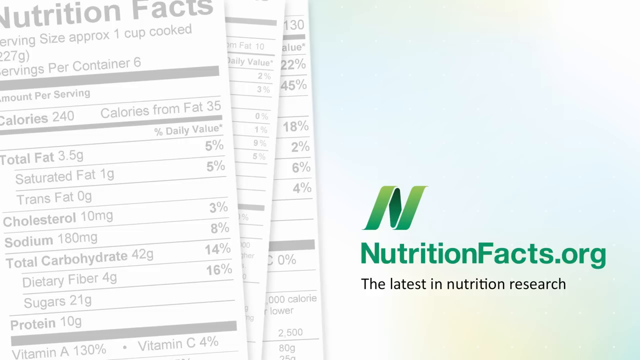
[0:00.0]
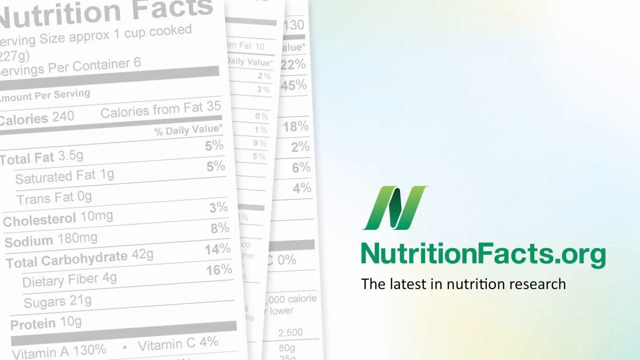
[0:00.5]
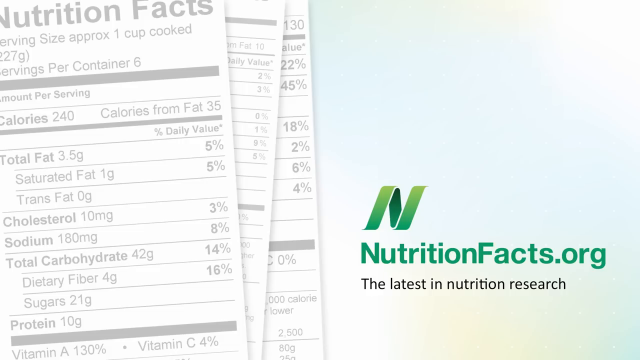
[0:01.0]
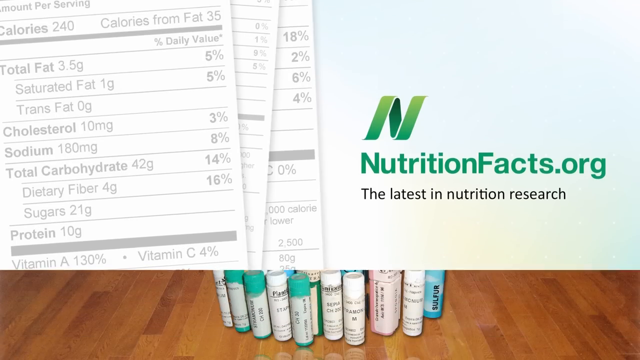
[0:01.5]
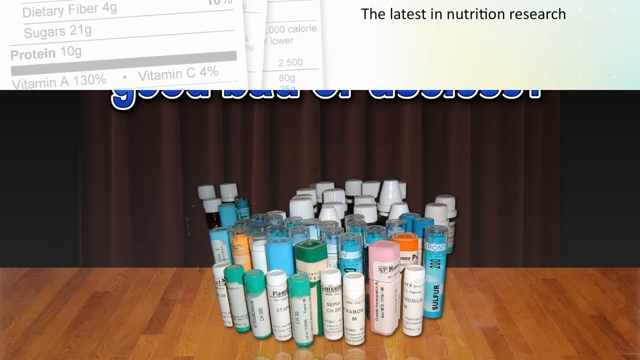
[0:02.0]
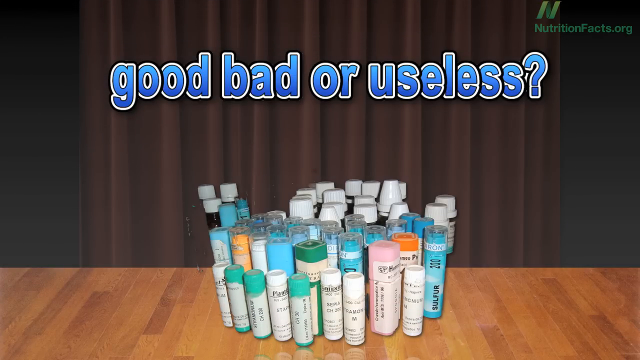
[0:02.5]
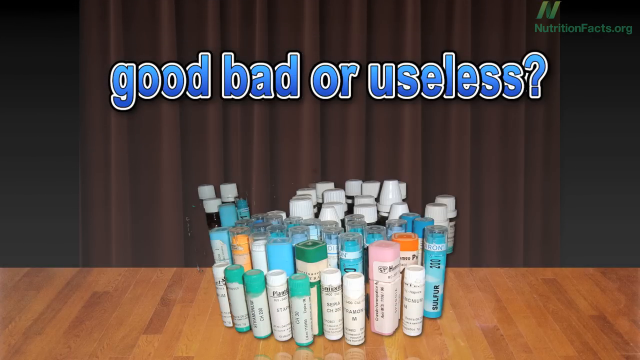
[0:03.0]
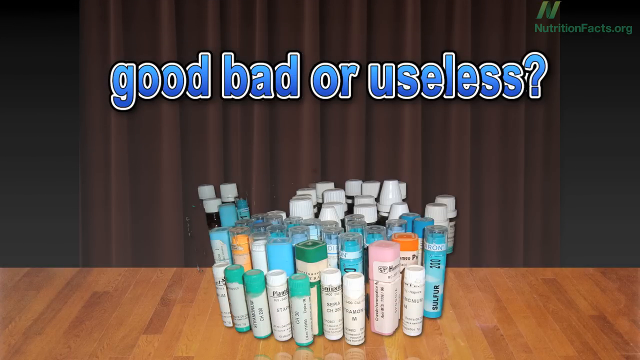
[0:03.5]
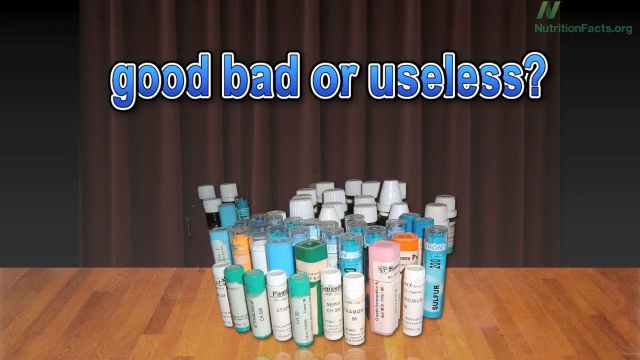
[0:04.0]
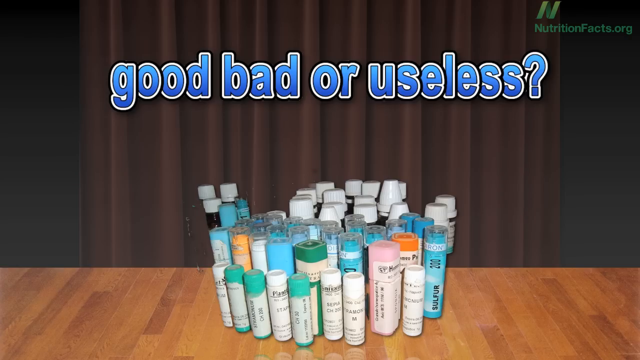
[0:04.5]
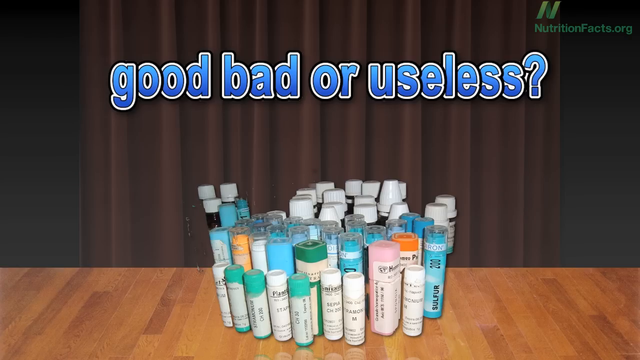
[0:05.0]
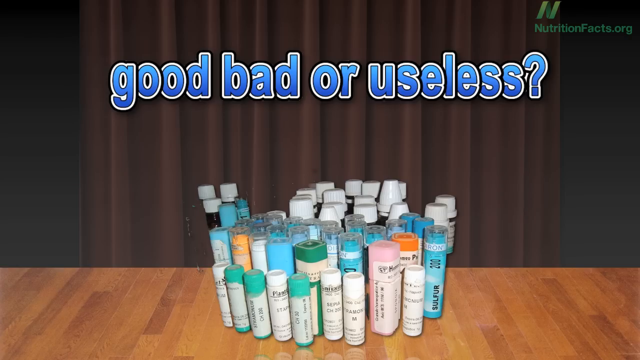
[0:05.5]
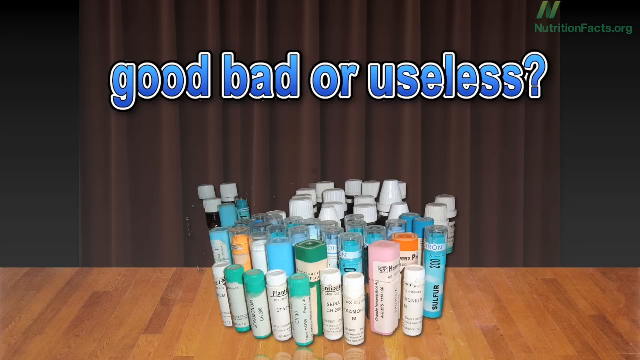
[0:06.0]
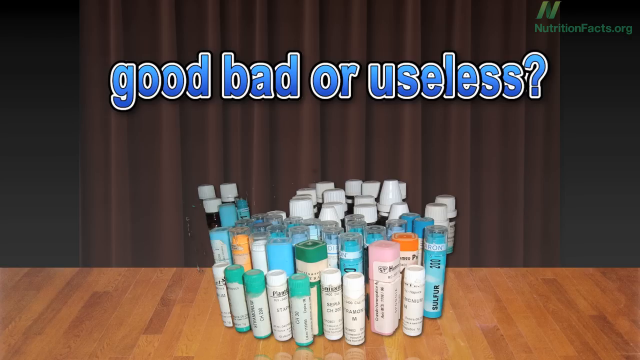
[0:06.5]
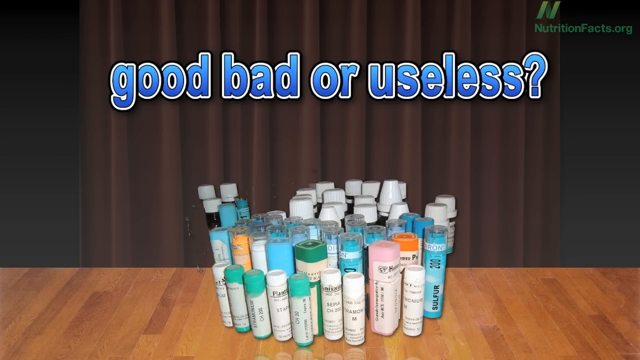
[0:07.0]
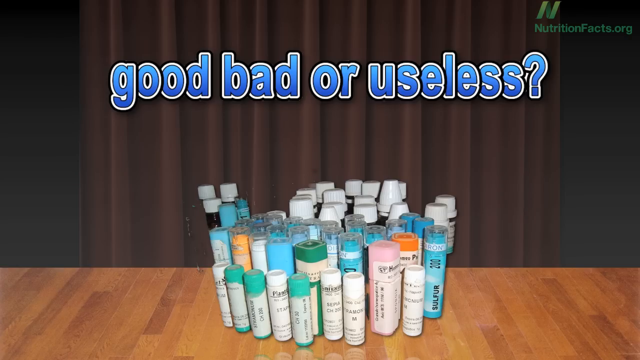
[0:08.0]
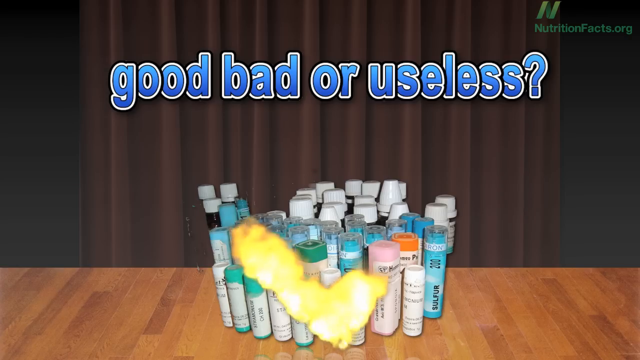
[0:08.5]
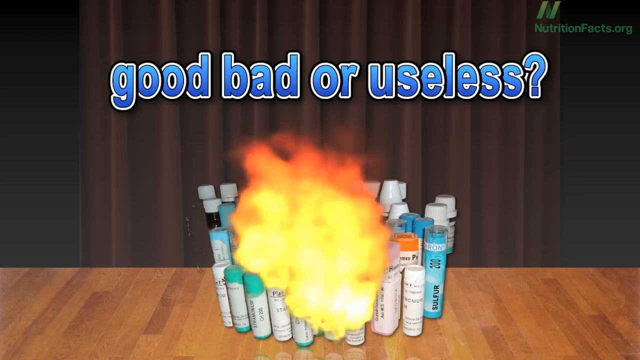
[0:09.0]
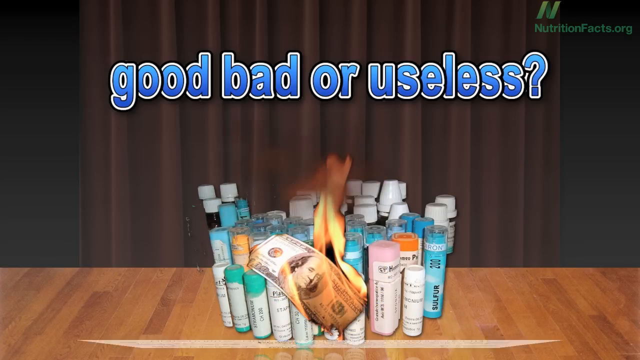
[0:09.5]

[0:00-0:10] The video is from nutritionfacts.org, the latest in nutrition research. It opens on a title page with the logo and website information in the bottom right corner. On the left side are examples of nutritional information like that found on food packages, showing calories, total fat, cholesterol and similar items along with their percent daily value. Next comes a series of many canisters that are hard to make out; they look like medications or something similar. Above them, blue text reads "good, bad, or useless."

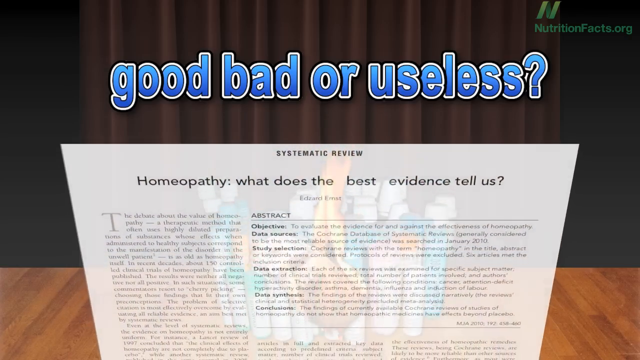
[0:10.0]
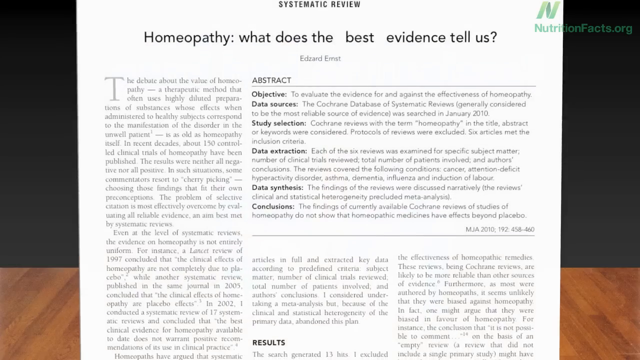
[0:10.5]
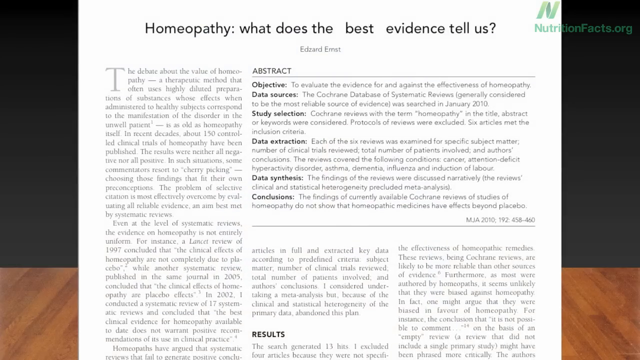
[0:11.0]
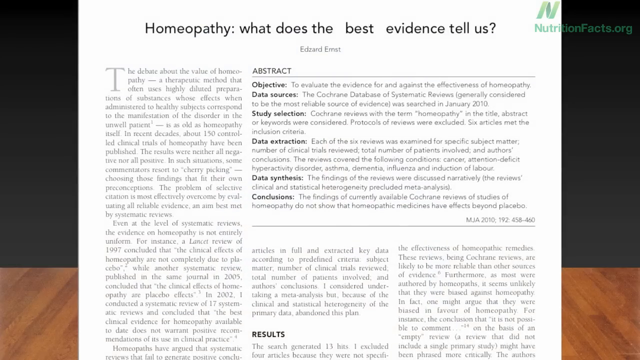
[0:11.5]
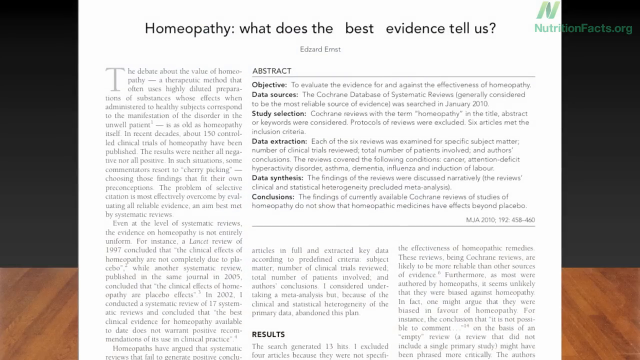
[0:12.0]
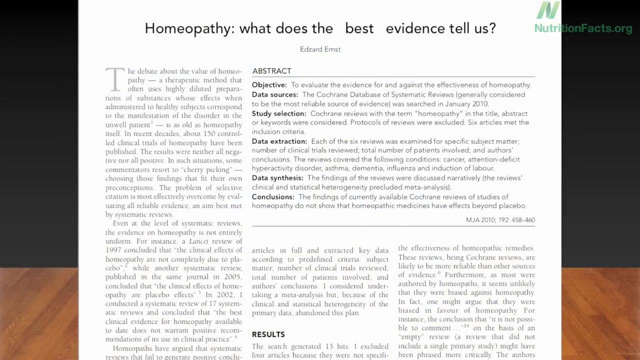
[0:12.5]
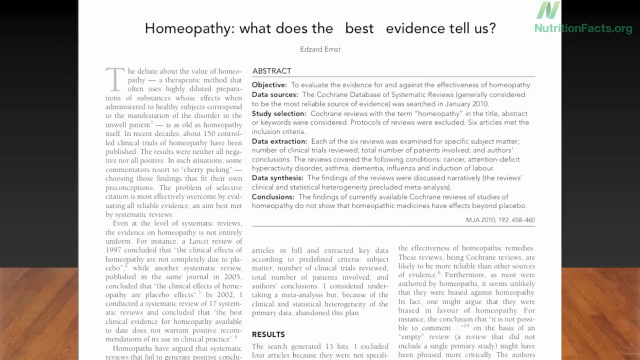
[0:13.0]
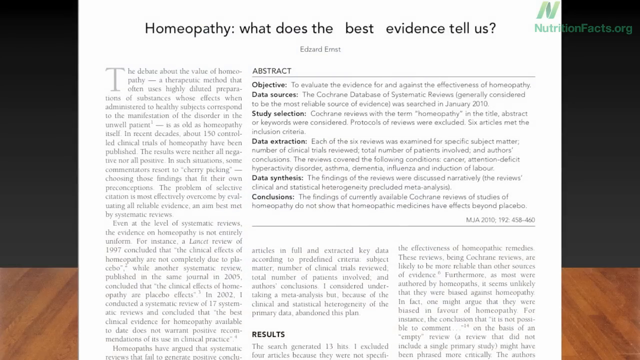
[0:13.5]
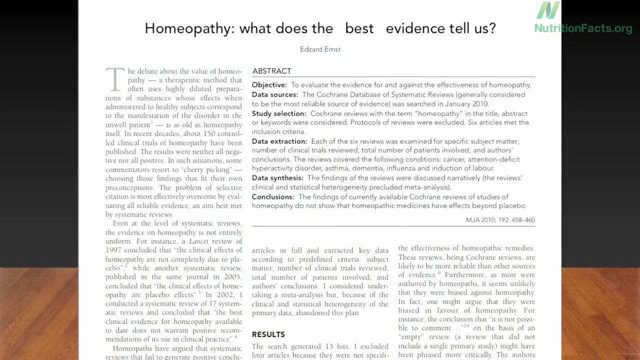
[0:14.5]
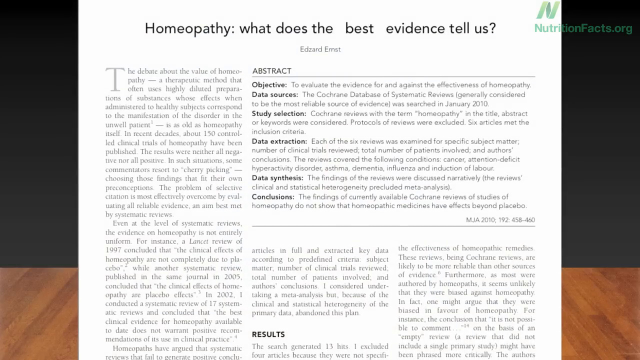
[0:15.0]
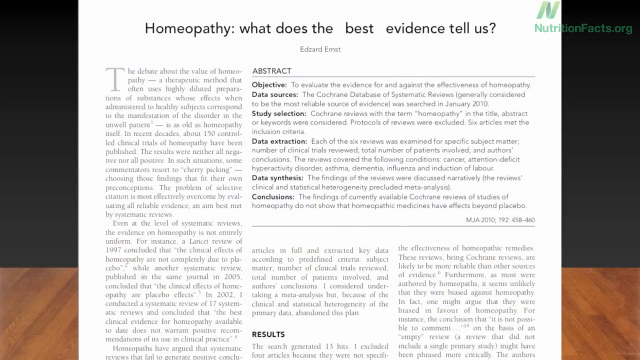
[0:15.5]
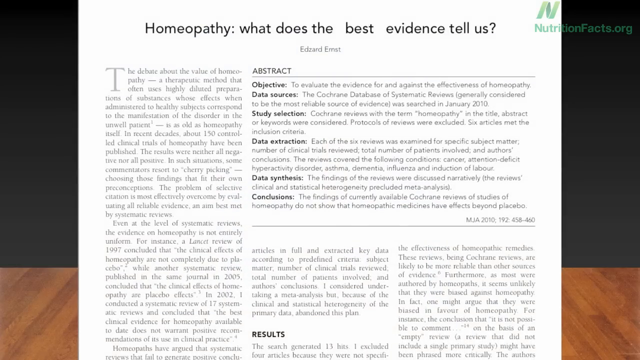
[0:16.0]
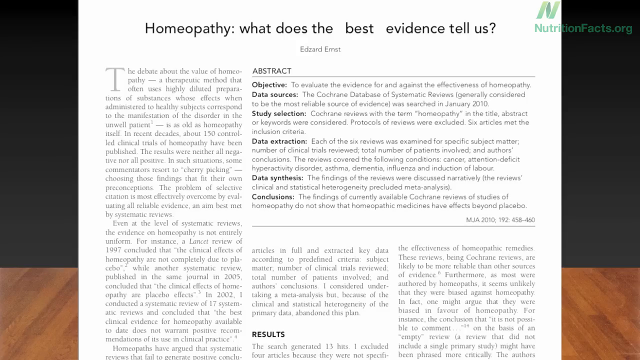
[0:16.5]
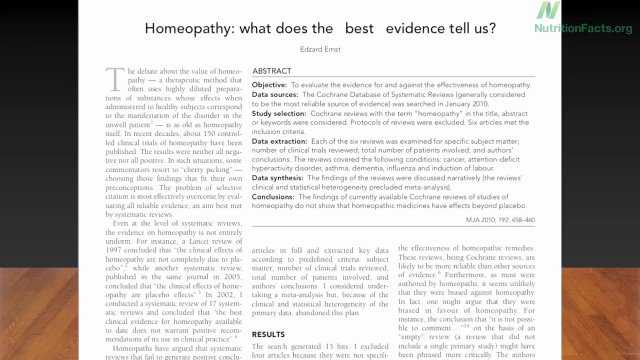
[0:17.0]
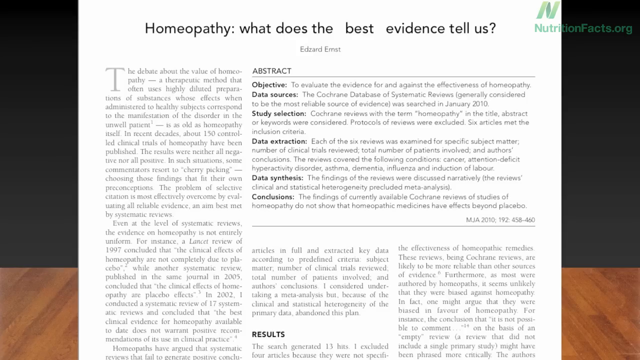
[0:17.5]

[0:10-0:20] Flames start showing up on top of the models. Text then appears on the screen that seems to be from some sort of peer-reviewed article, titled "Homeopathy, What Does the Best Evidence Tell Us?" by Ednard Ernst. The abstract and the article itself are shown, but the text is very hard to read. Under the abstract are the objective, the data source, the study selection and other sections that make up a peer-reviewed article, though the actual content is hard to see at this scale.